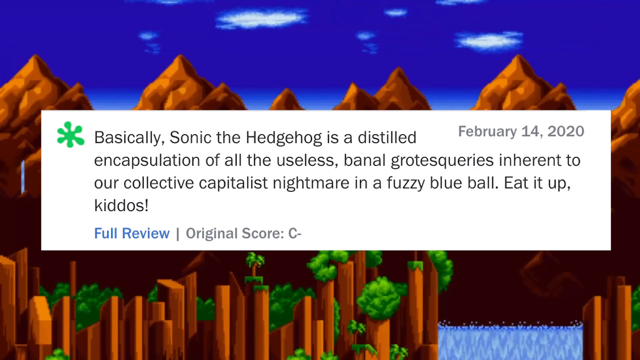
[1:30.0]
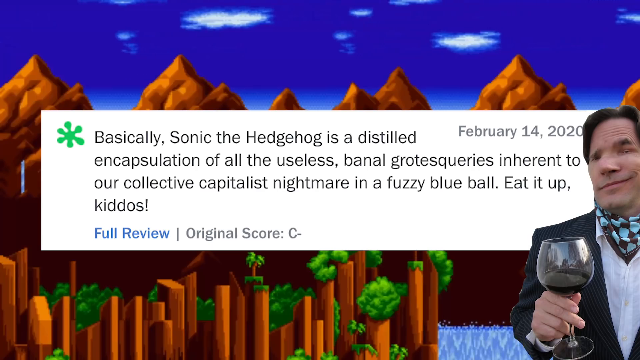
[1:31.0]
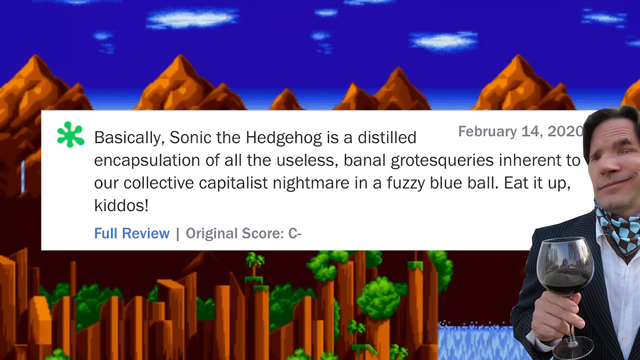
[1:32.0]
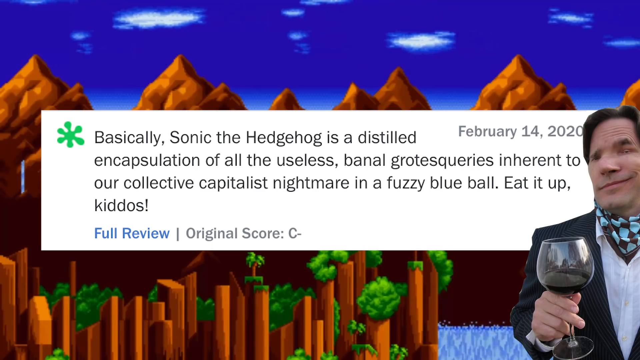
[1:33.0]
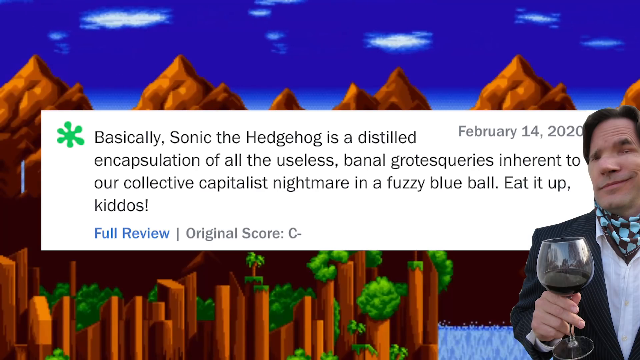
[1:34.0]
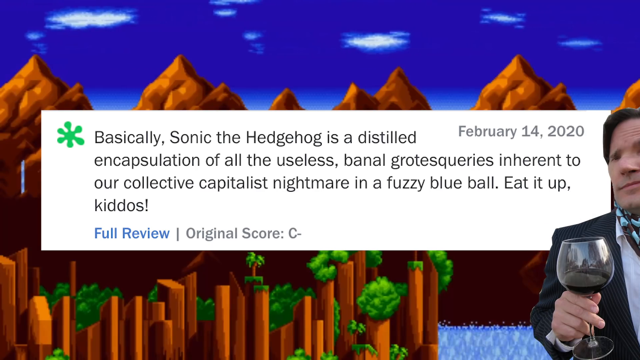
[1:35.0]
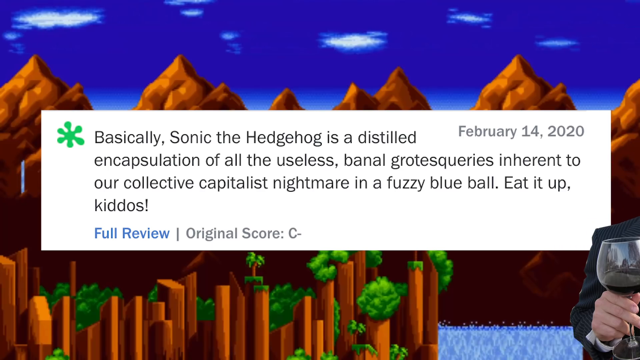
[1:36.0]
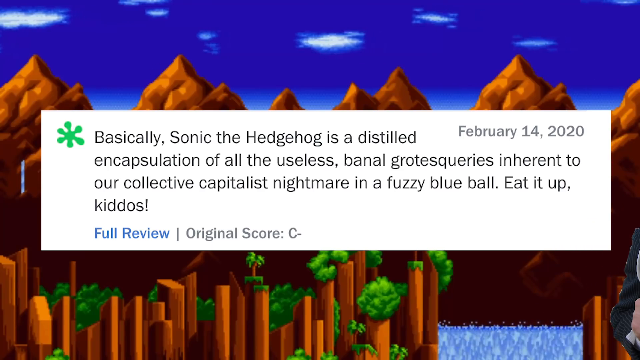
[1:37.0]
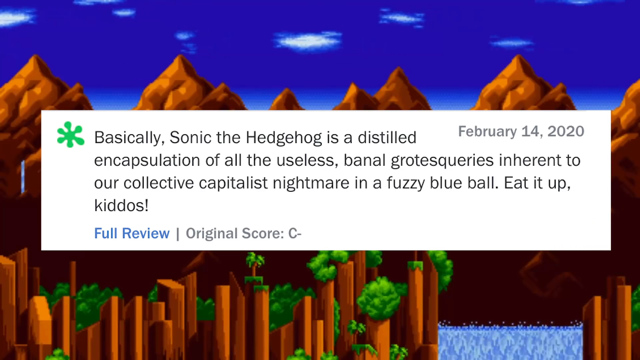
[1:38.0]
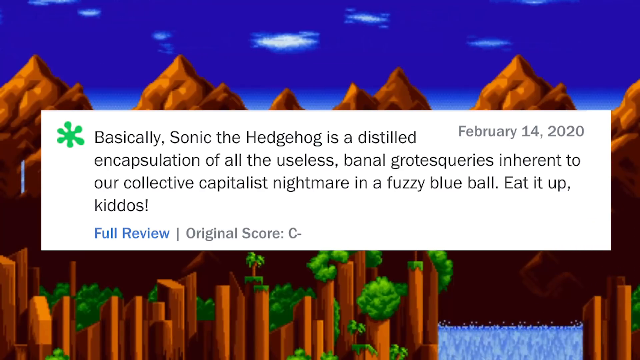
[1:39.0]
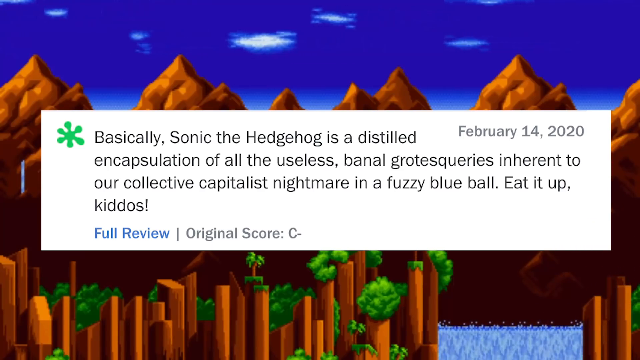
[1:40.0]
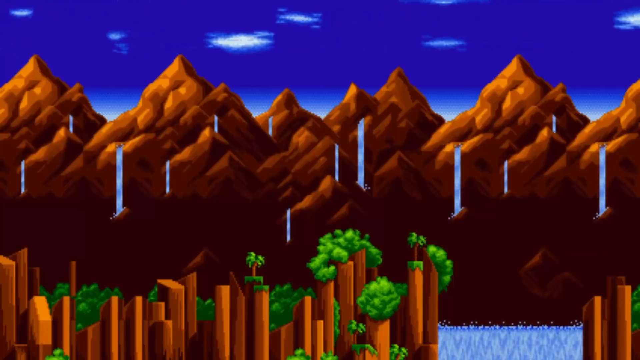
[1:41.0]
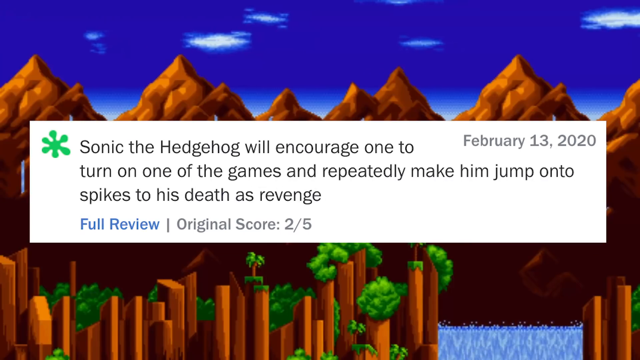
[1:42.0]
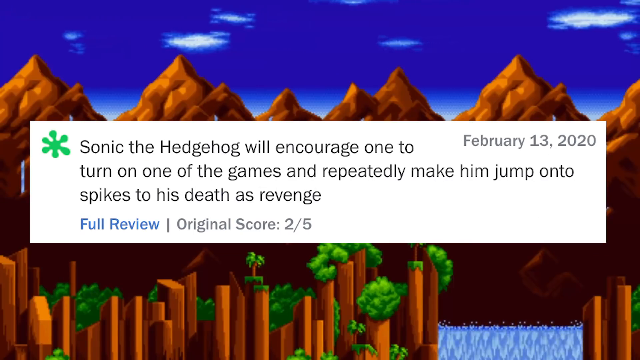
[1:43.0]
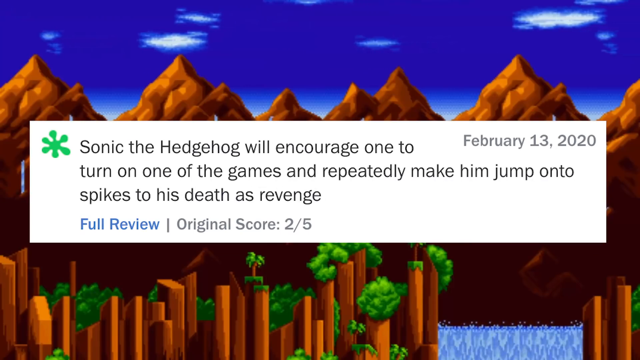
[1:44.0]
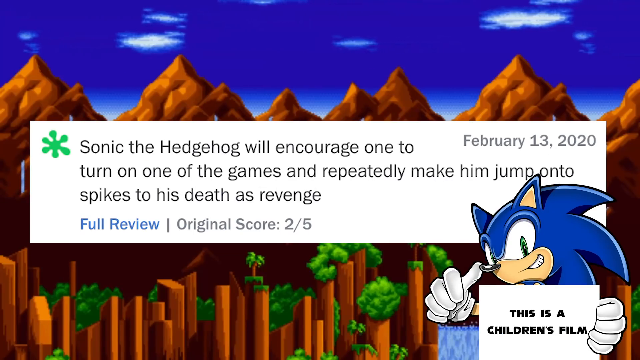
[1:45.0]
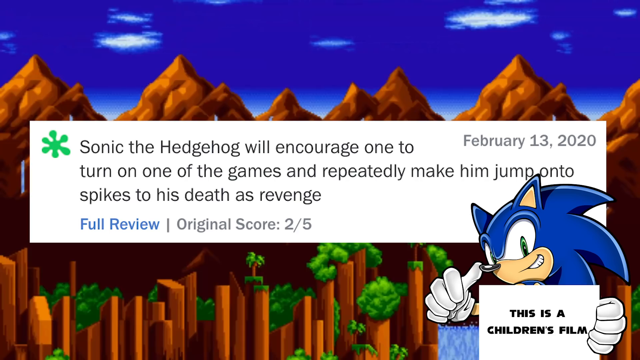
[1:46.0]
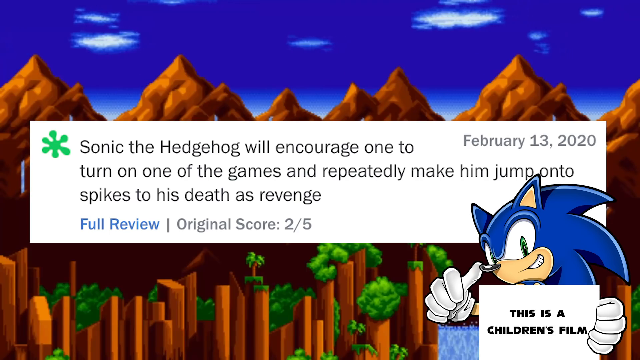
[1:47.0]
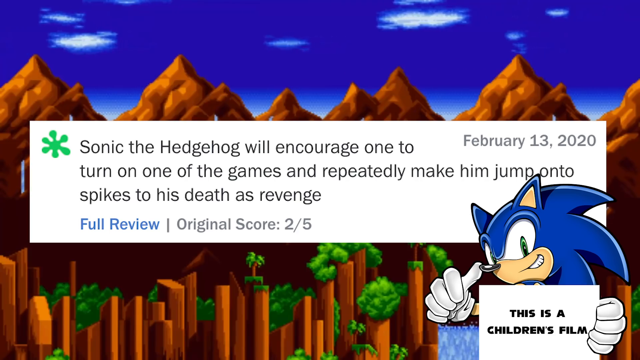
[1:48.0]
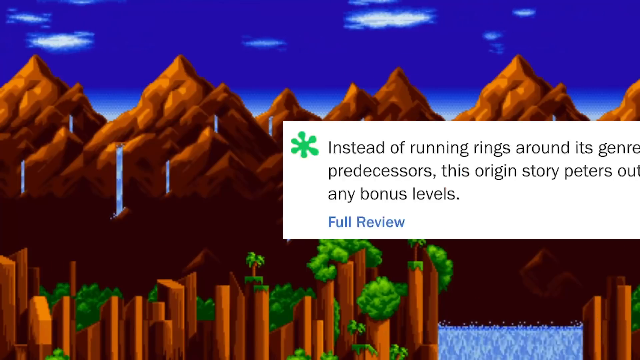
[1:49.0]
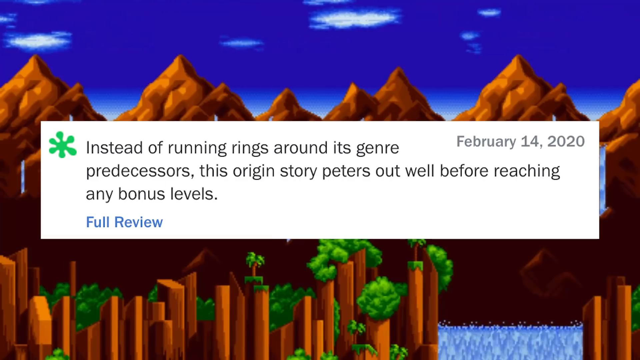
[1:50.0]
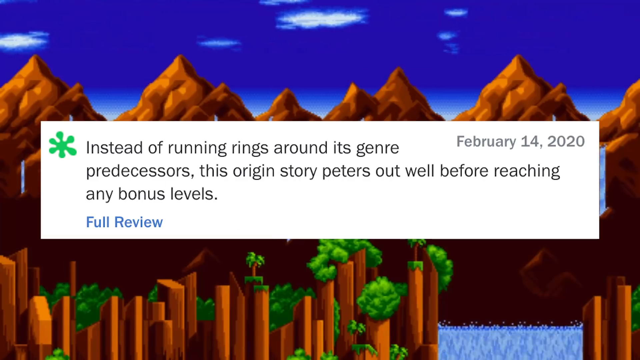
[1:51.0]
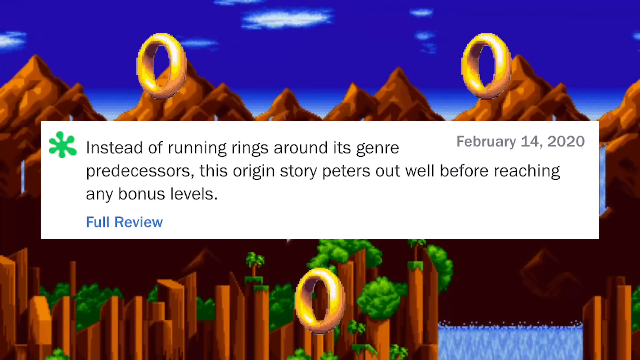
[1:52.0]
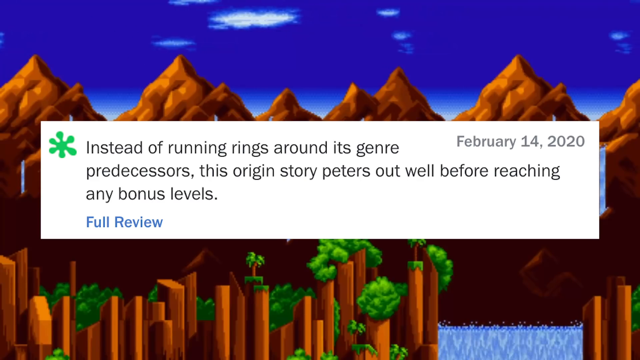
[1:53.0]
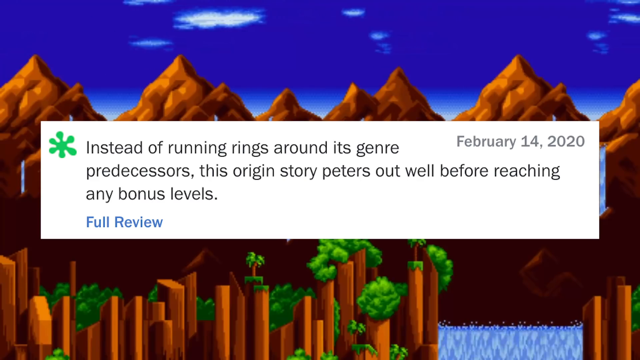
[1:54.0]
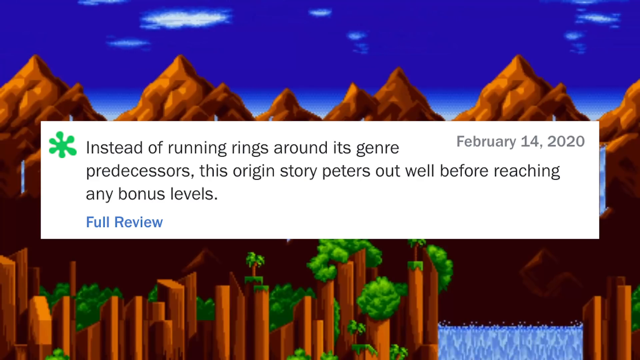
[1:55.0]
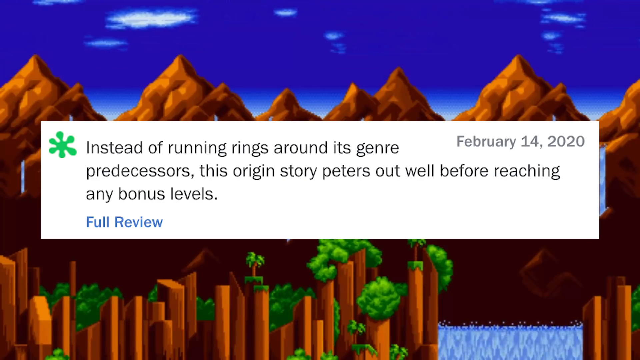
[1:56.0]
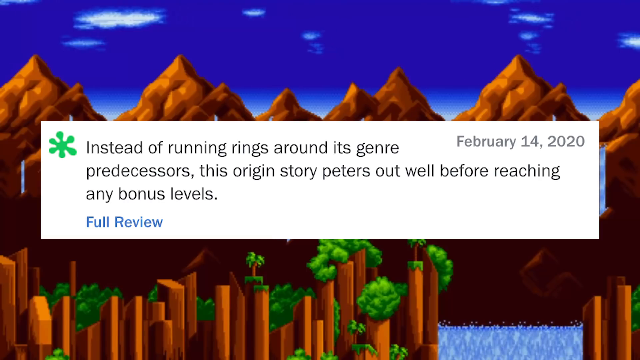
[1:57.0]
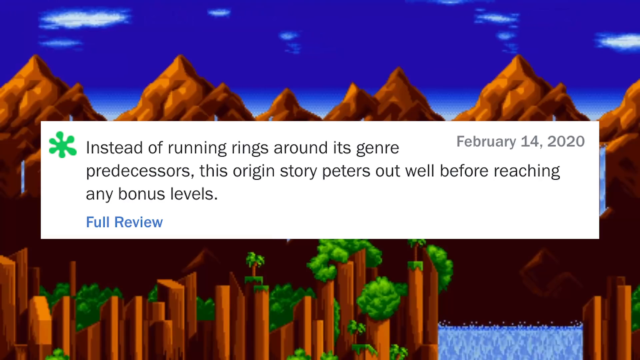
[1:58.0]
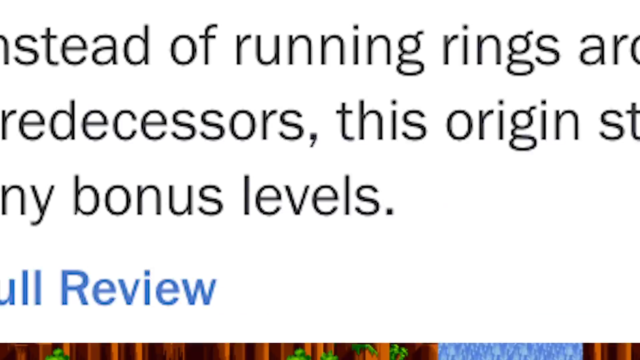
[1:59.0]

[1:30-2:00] The next review, also from Valentine's Day, states: "Sonic the Hedgehog is a distilled encapsulation of all of the useless, banal, grotesqueries inherent to our collective capitalist nightmare in a fuzzy blue ball. Eat it up, kiddos," with a C minus grade. Another review, from February 13th, states: "Sonic the Hedgehog will encourage one to turn on one of the games and repeatedly make him jump onto spikes to his death as revenge," with a score of 2 out of 5. The Sonic the Hedgehog graphical image then appears with a caption stating "this is a children's film". Another review, from Valentine's Day 2020, reads: "instead of running rings around its genre predecessors, this origin story peters out well before reaching any bonus levels," and gives no score. Three gold rings briefly appear on screen, and the video zooms in on "bonus levels".